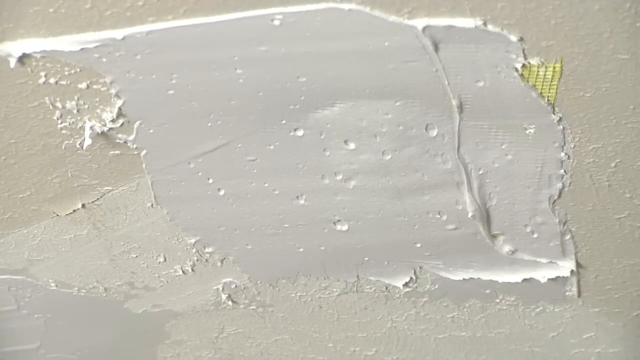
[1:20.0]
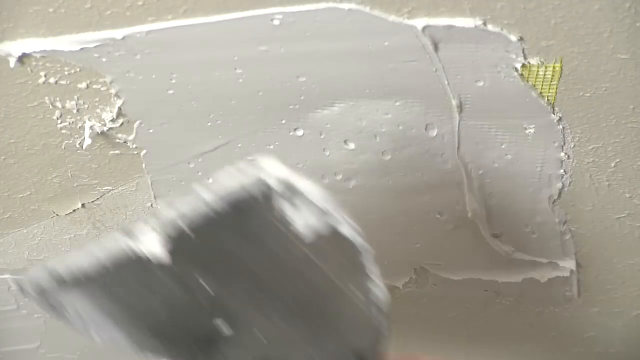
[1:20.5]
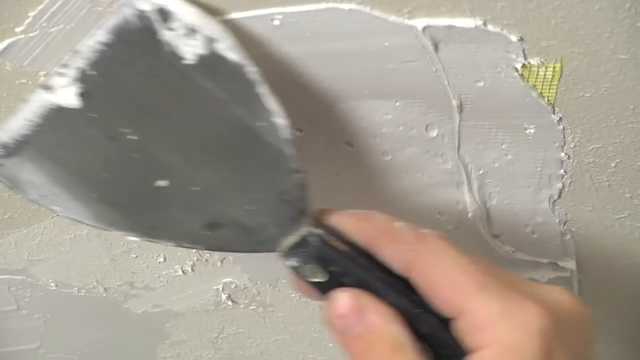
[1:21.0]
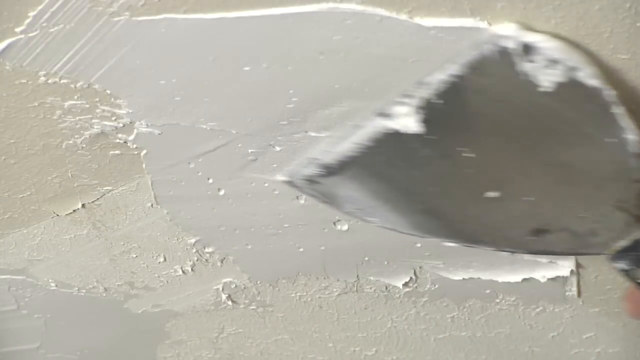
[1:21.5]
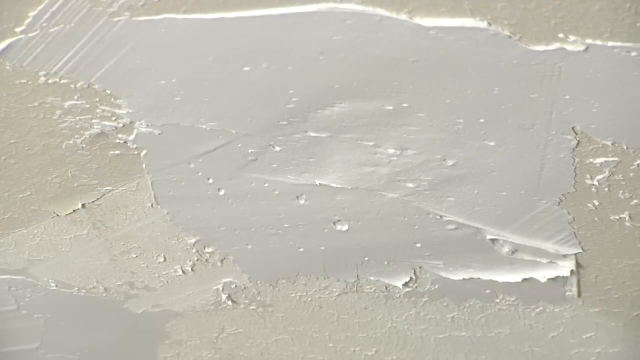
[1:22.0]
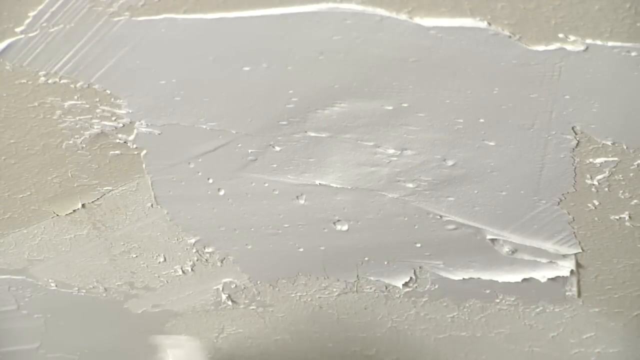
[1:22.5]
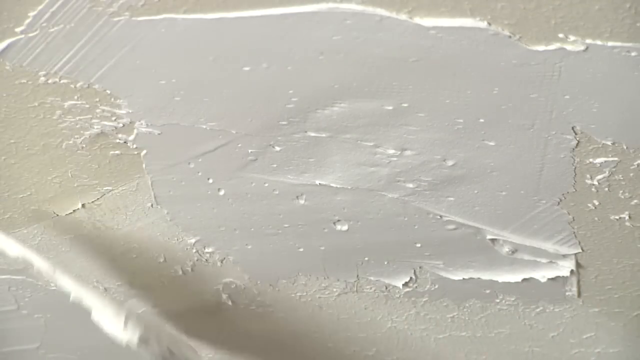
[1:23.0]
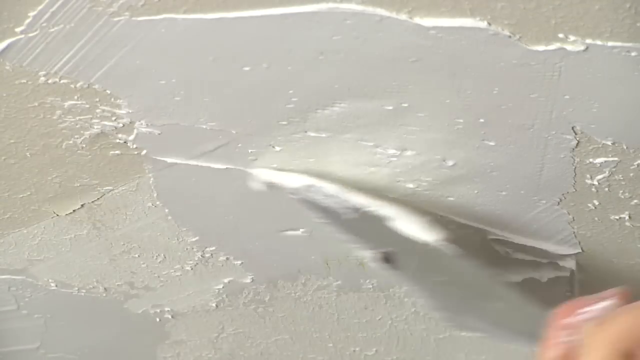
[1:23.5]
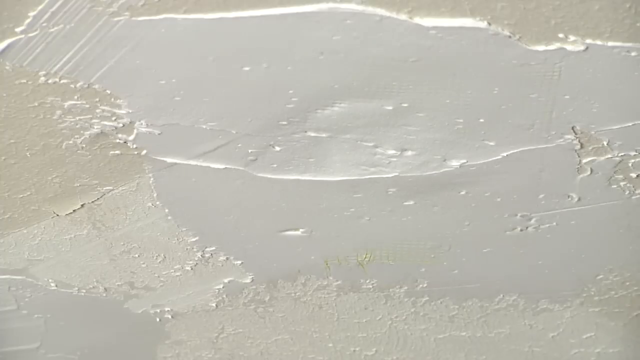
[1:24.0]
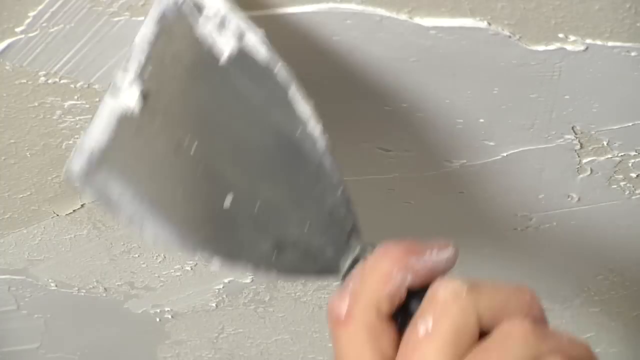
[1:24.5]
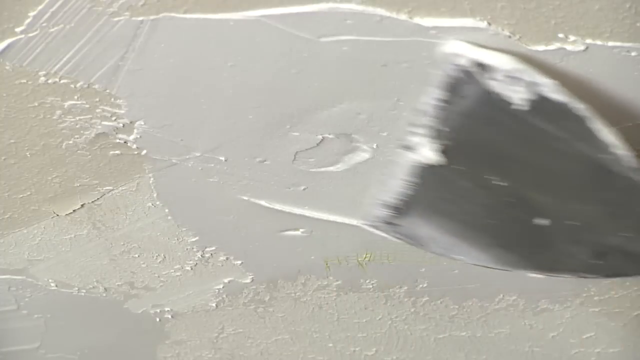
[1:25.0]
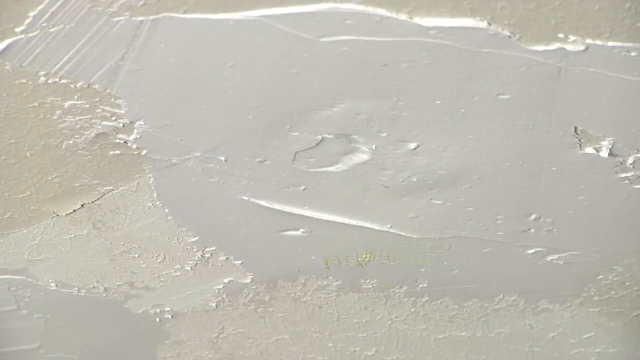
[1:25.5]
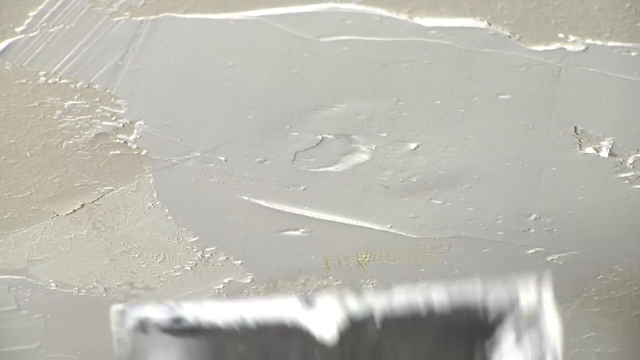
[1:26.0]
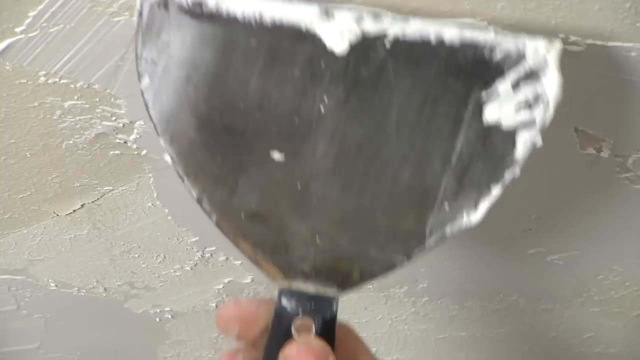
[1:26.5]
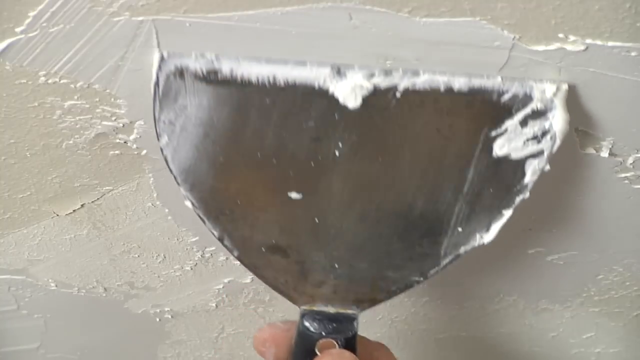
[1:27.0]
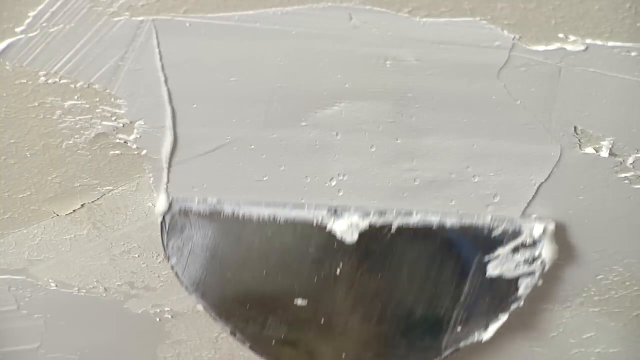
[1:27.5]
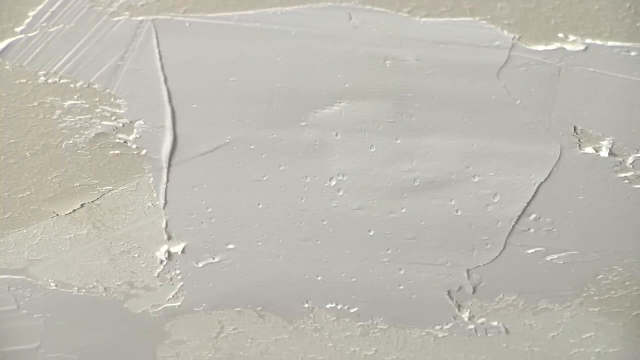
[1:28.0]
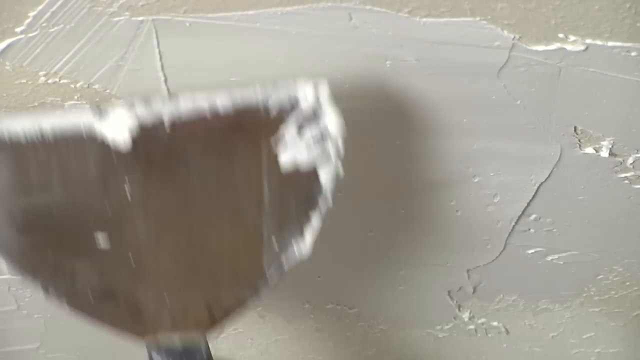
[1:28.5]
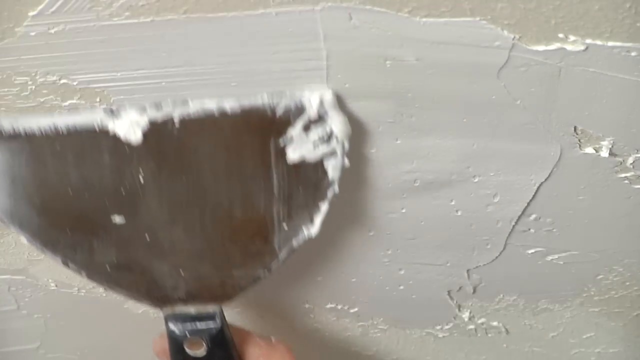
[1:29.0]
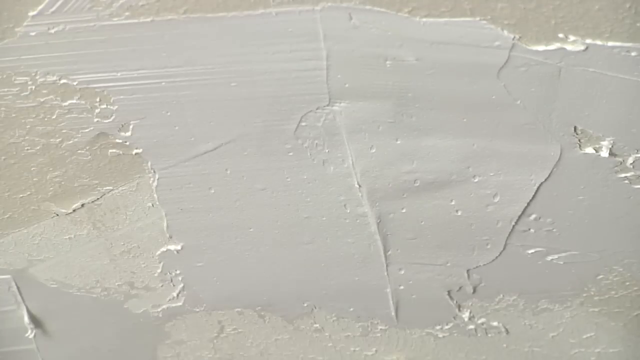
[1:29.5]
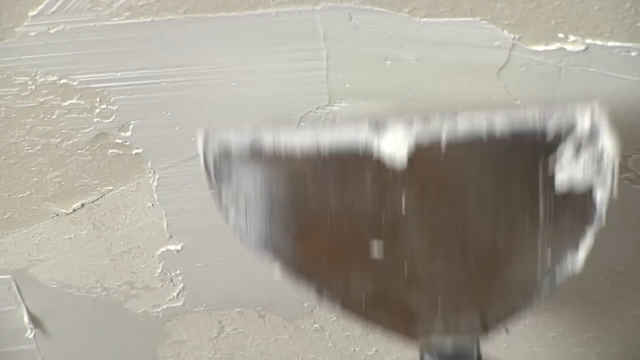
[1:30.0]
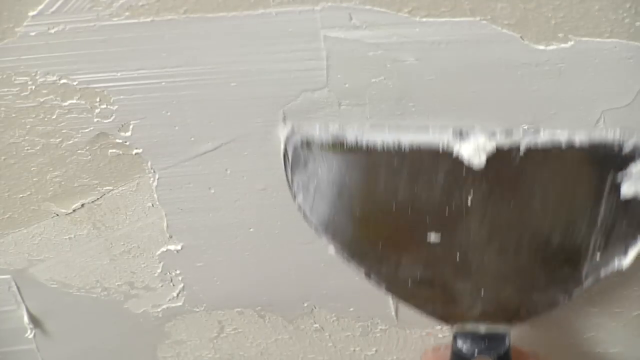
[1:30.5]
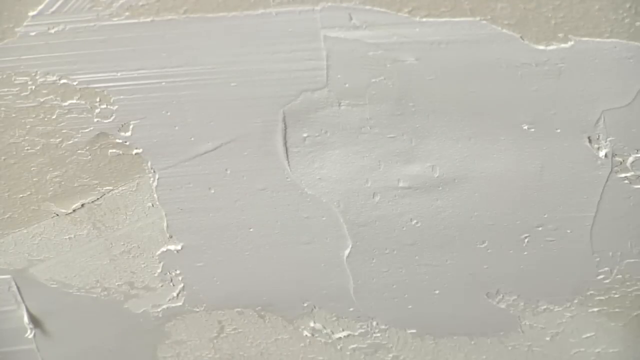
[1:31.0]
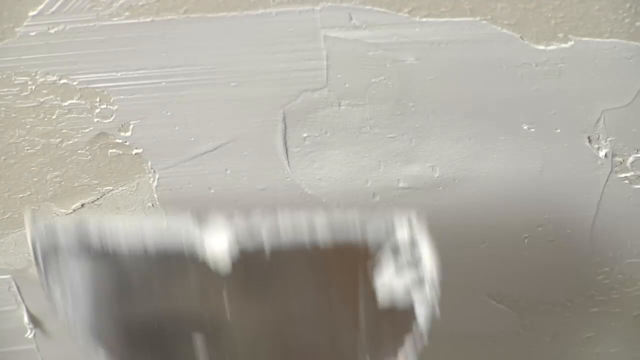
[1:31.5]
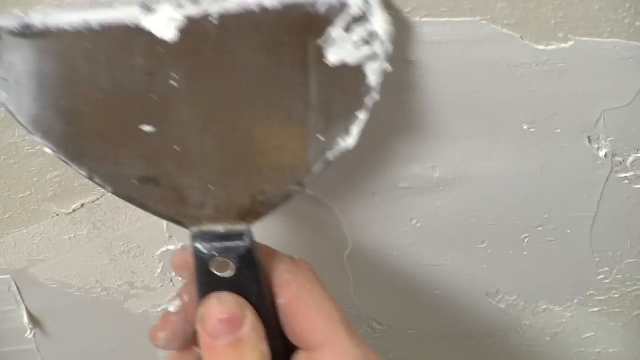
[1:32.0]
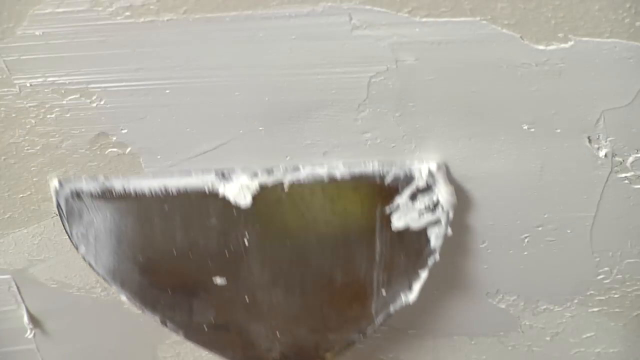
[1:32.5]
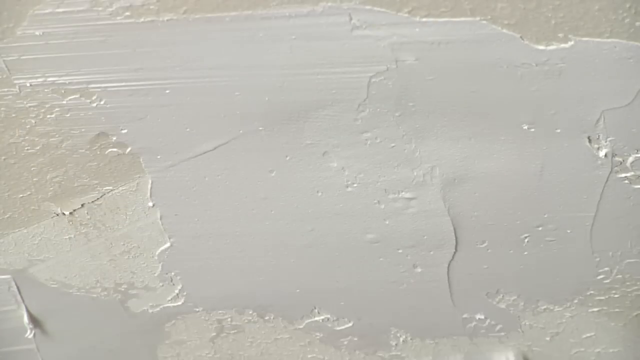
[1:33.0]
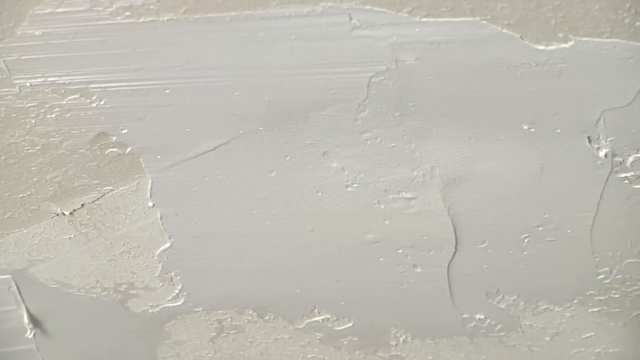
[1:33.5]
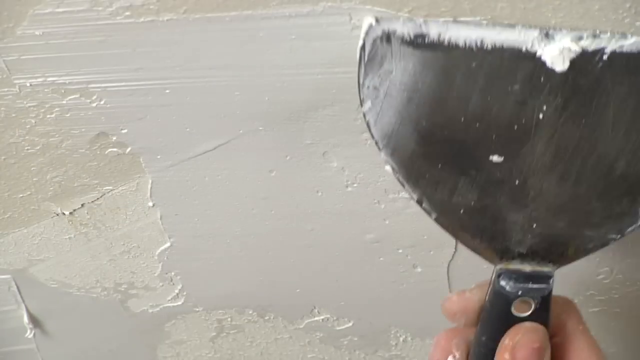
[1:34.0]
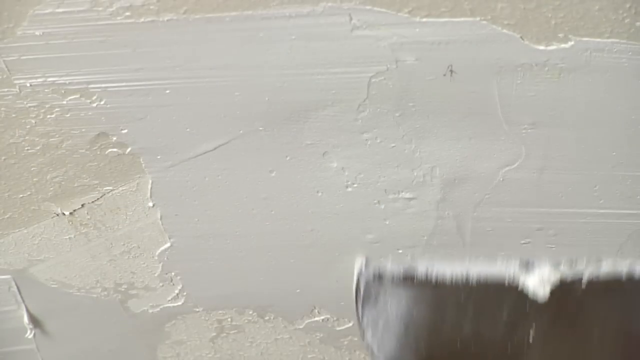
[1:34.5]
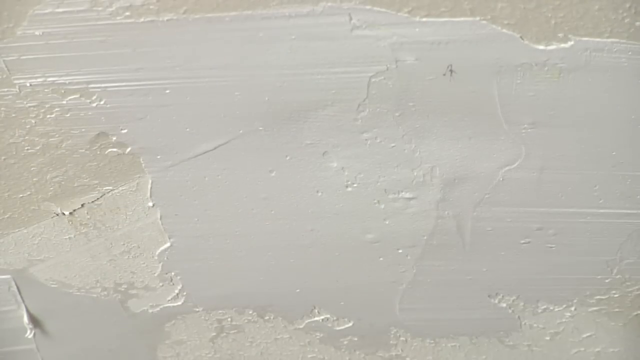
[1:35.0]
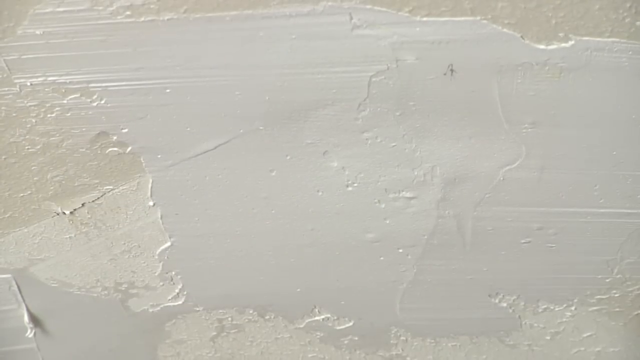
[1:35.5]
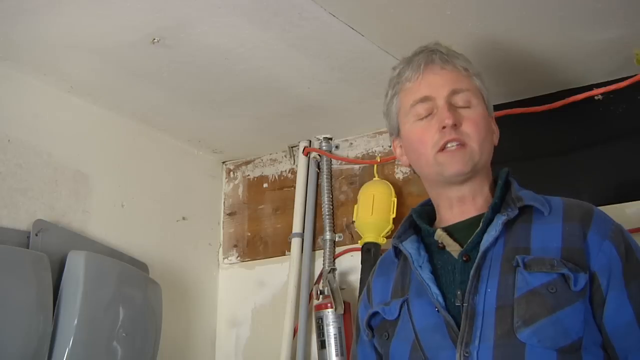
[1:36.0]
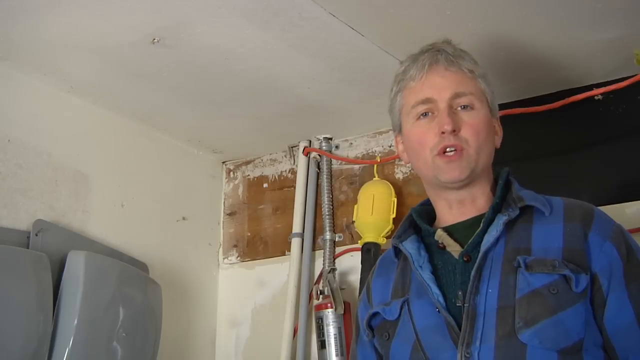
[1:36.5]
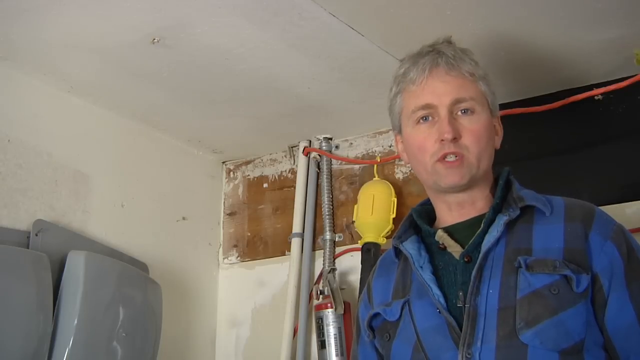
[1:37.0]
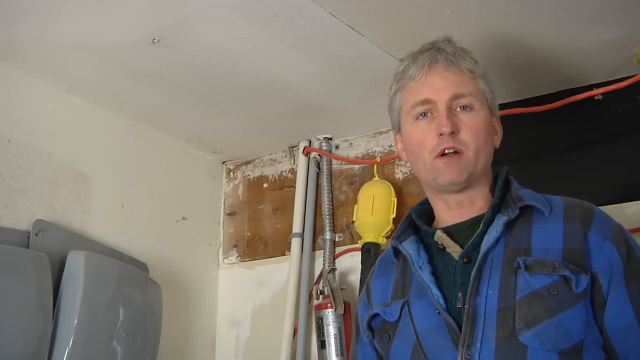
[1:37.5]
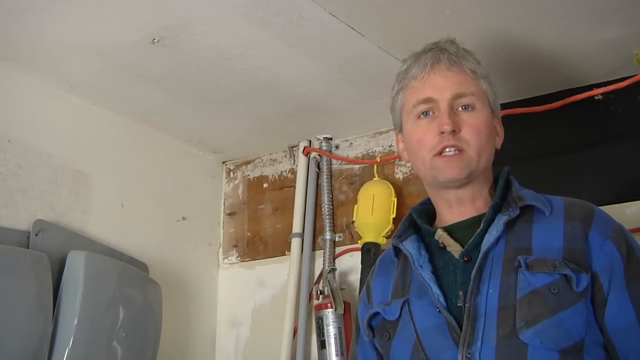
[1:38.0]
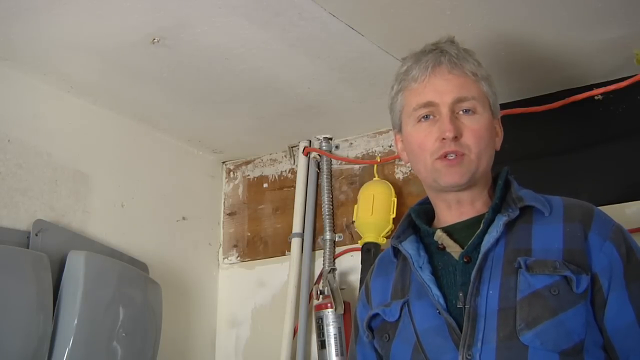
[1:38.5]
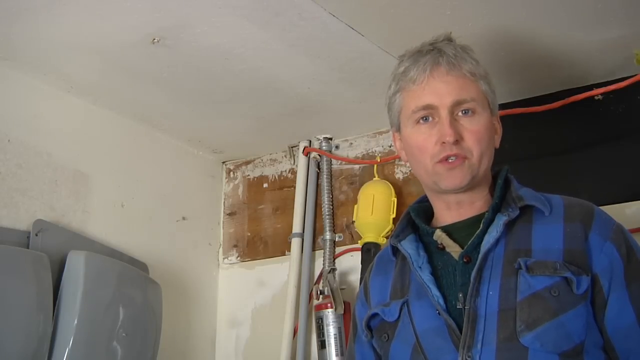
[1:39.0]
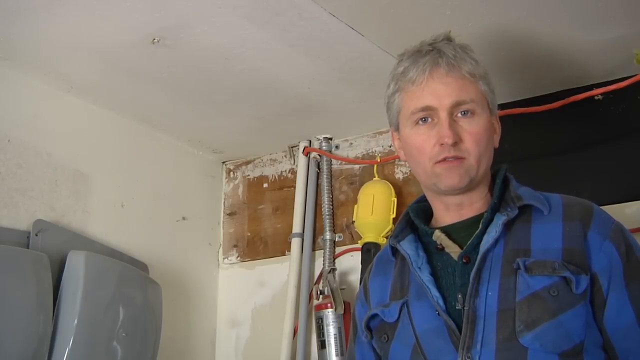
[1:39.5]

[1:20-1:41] Another stroke of spackle completely covers the corner, and the mesh is no longer visible. The smooth spackle is applied with a stroke from left to right, then another, then another from top to bottom, repeatedly smoothing the area that was previously damaged. Before the shot changes, the spackle is very smooth and even, without any ridges or bumps; the damage is fixed and the surface appears ready for primer and painting. In total, Chris apparently applies eight strokes with the trowel-like tool to smooth the spackle completely. The shot cuts to Chris talking, toward the right side of the frame, apparently about what he just did. The frame then fades to black.